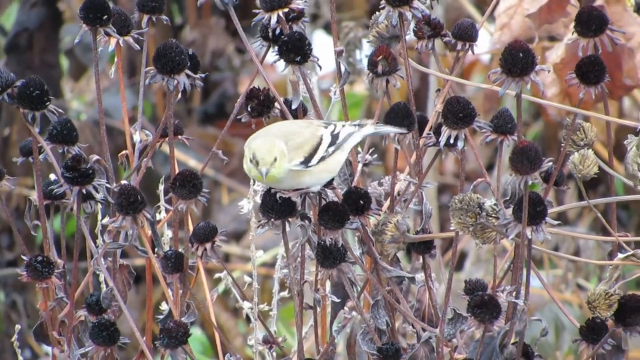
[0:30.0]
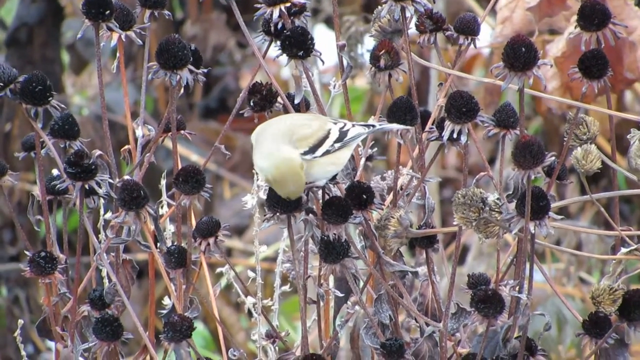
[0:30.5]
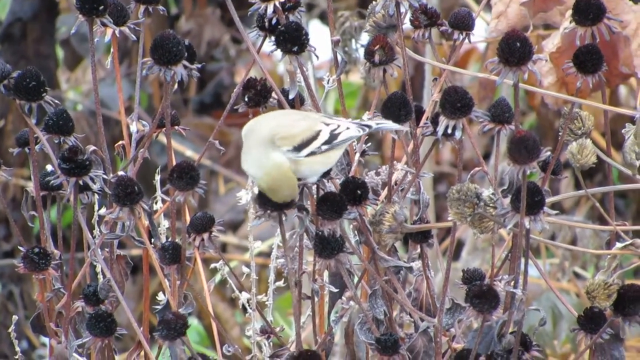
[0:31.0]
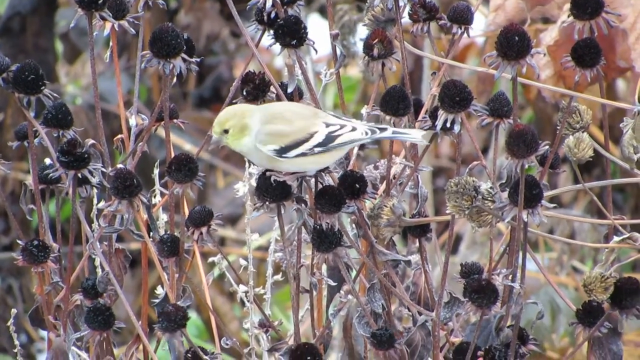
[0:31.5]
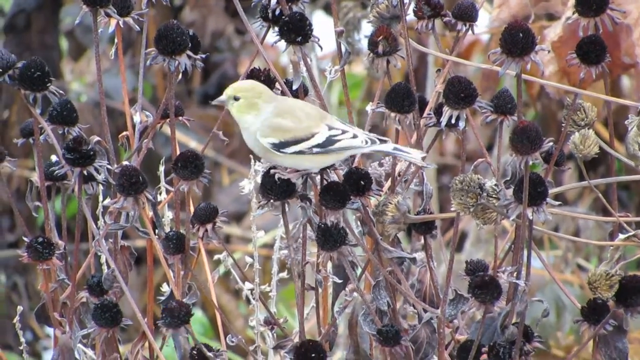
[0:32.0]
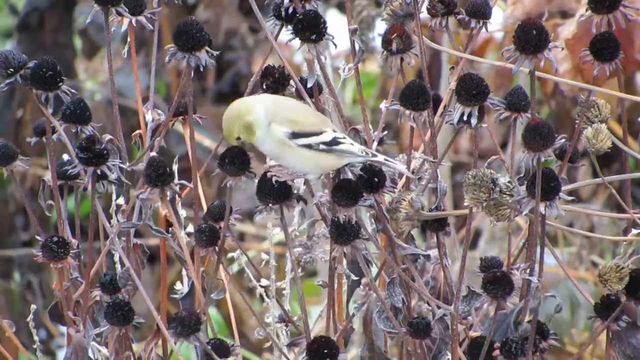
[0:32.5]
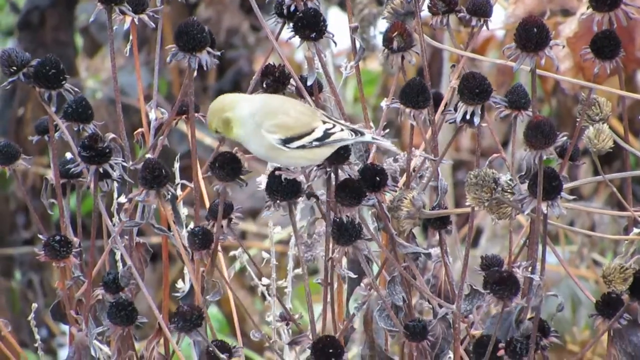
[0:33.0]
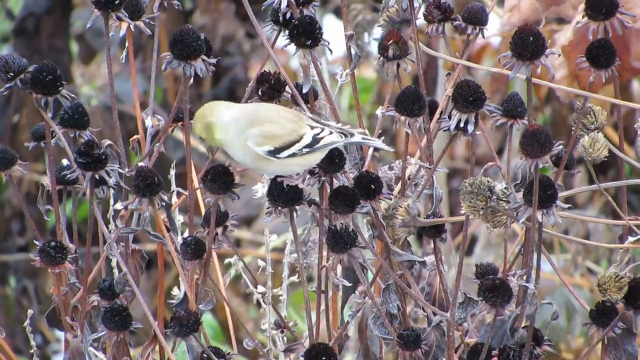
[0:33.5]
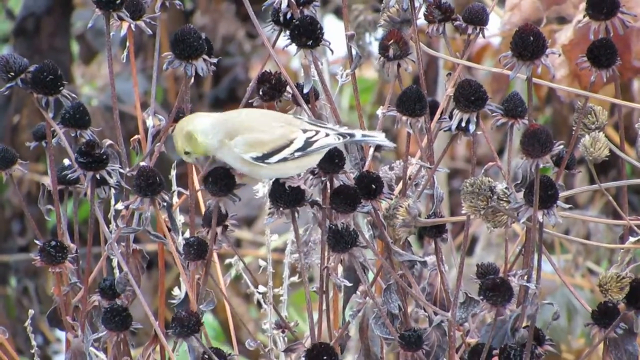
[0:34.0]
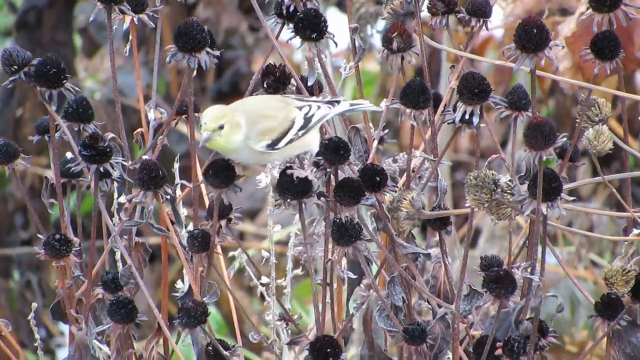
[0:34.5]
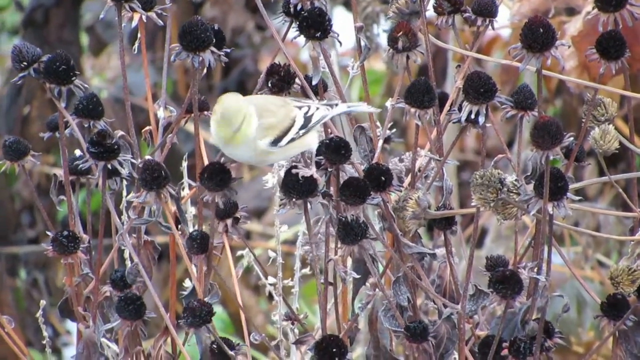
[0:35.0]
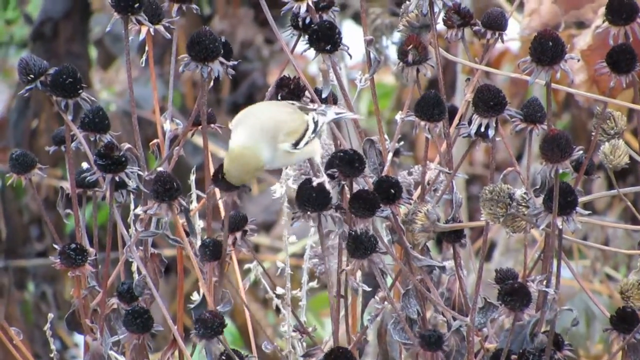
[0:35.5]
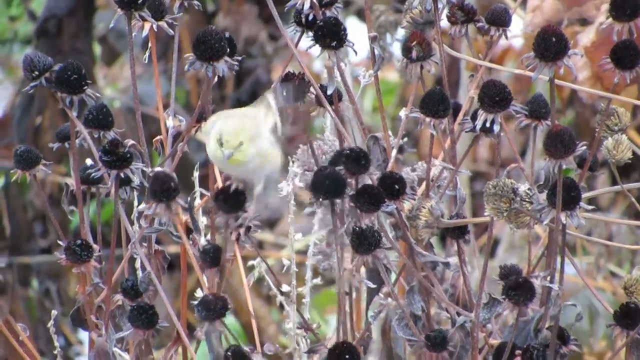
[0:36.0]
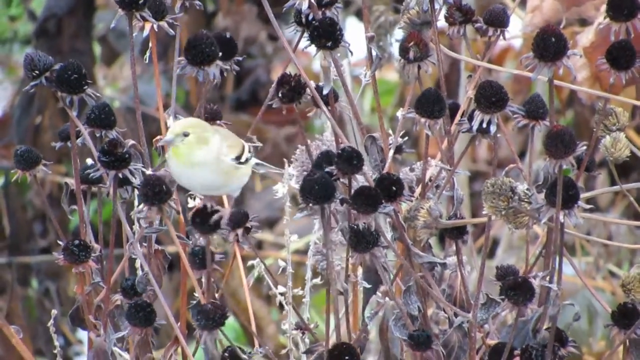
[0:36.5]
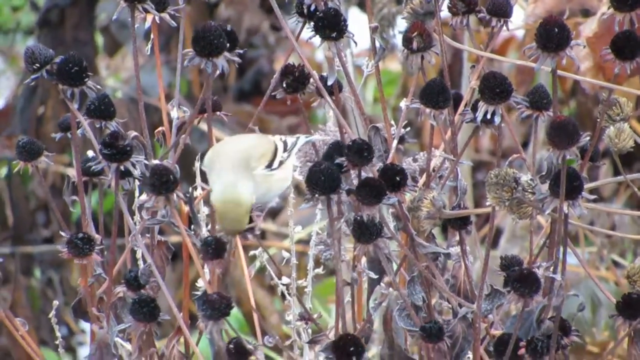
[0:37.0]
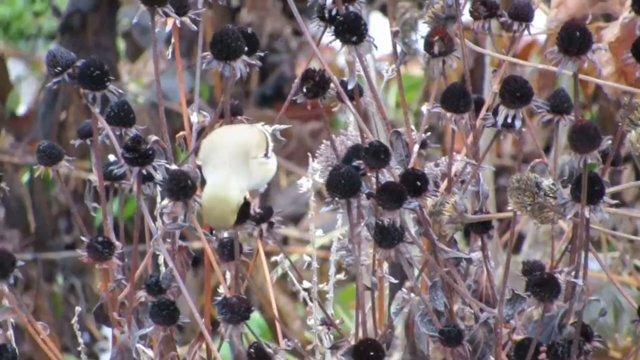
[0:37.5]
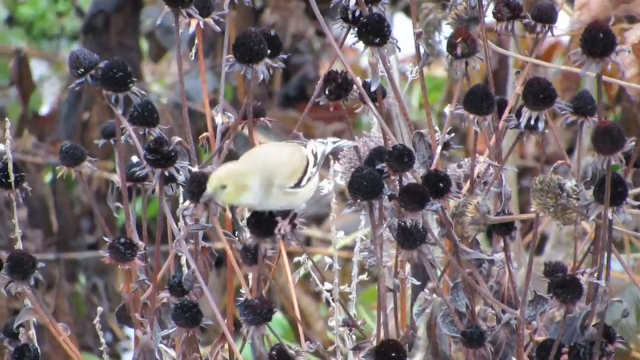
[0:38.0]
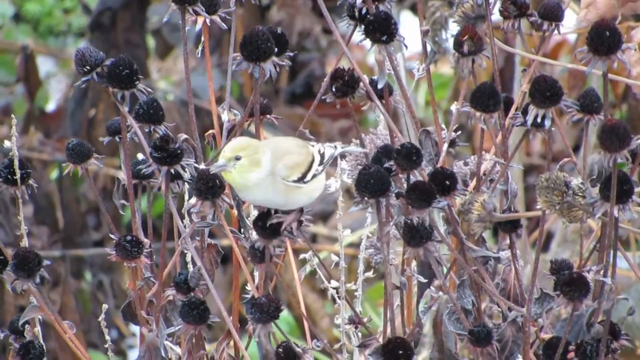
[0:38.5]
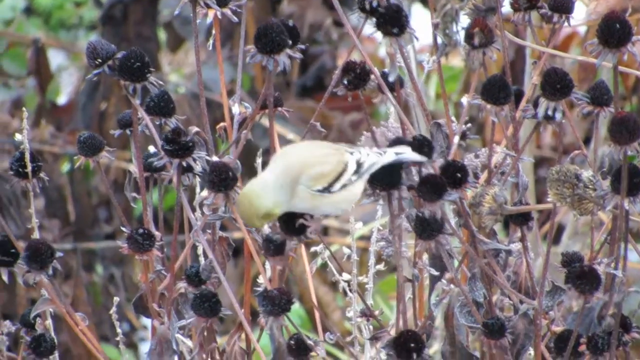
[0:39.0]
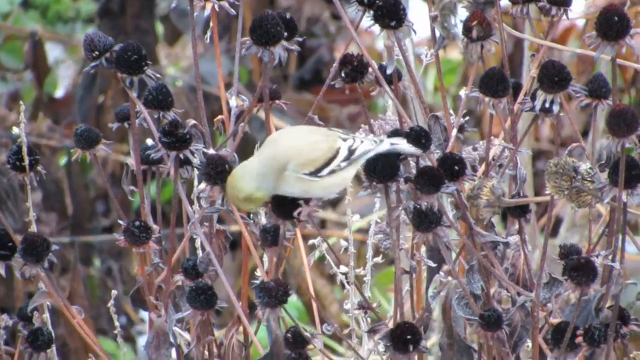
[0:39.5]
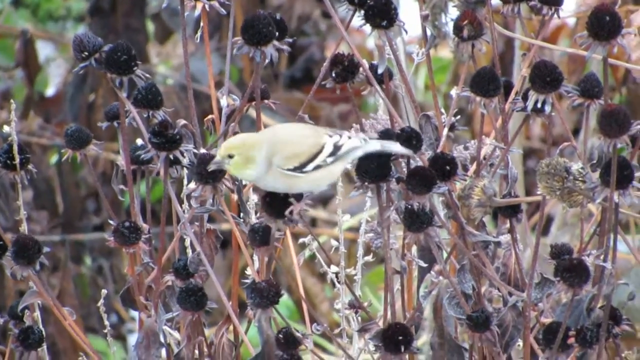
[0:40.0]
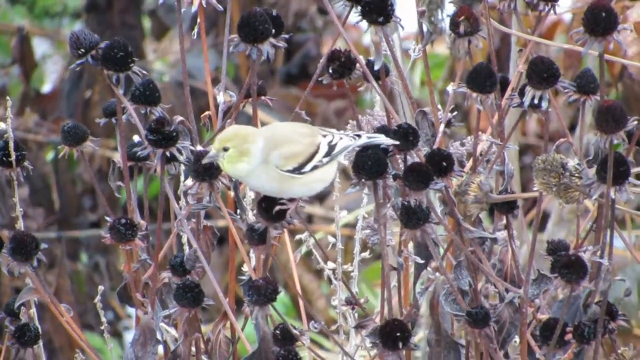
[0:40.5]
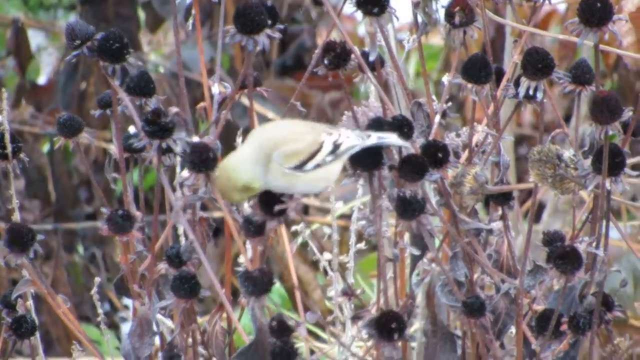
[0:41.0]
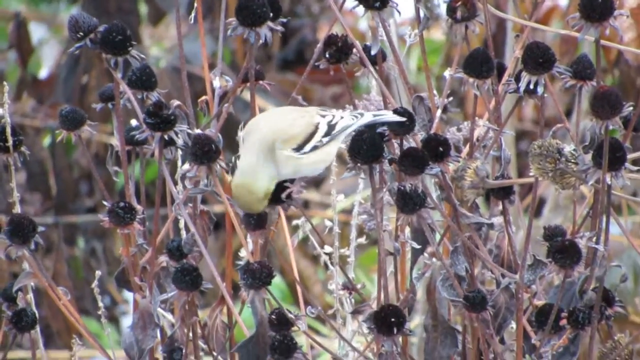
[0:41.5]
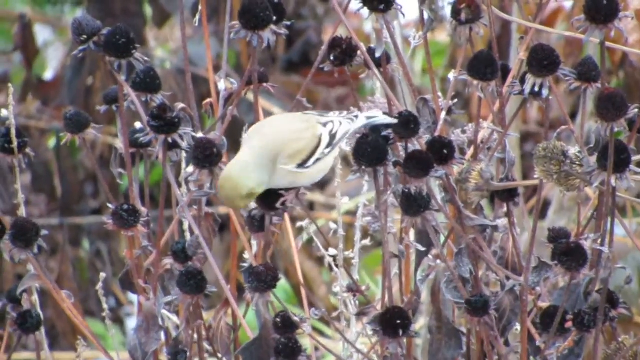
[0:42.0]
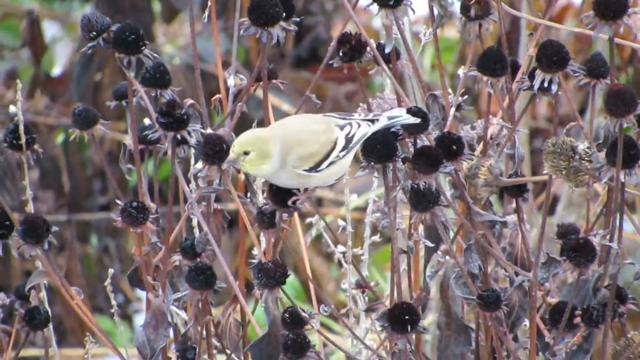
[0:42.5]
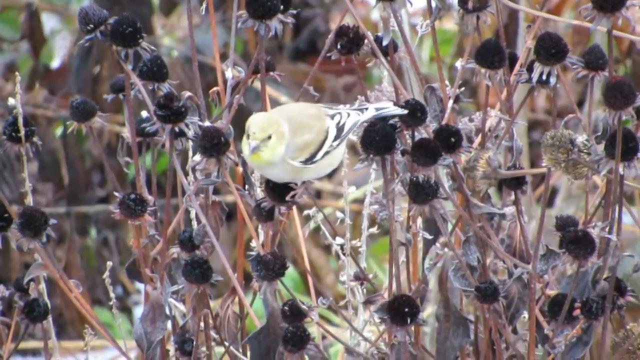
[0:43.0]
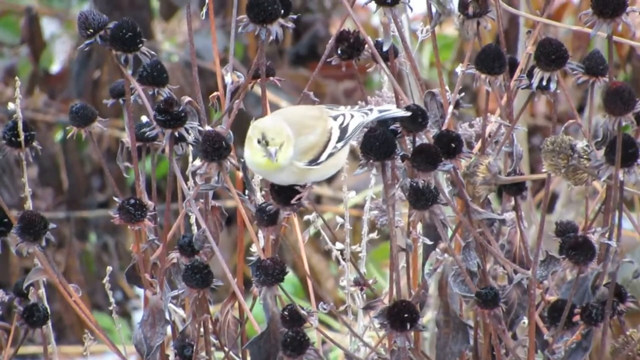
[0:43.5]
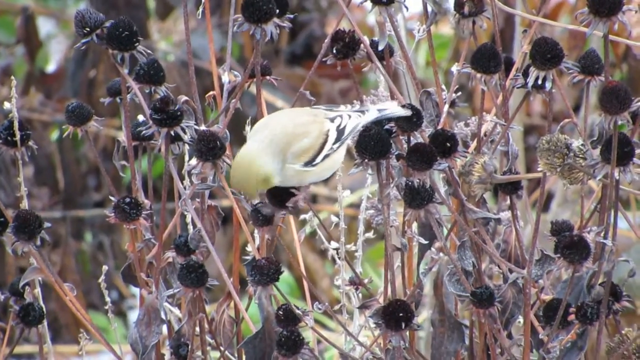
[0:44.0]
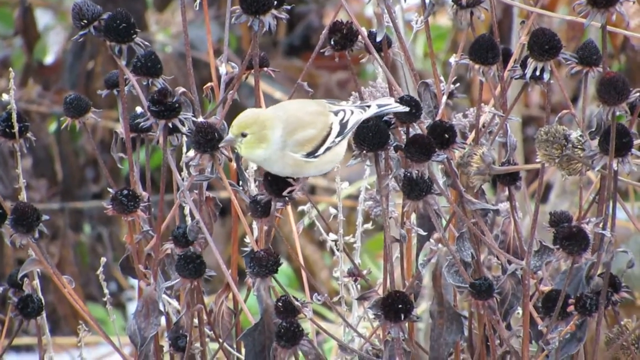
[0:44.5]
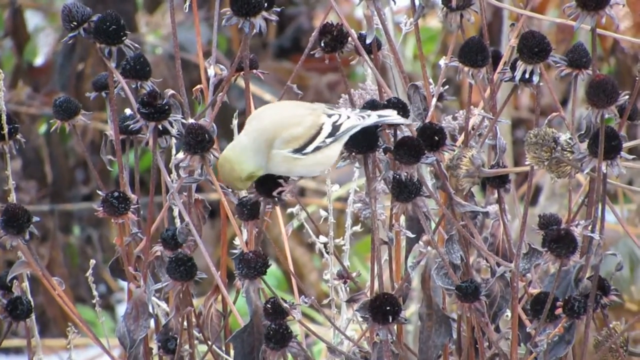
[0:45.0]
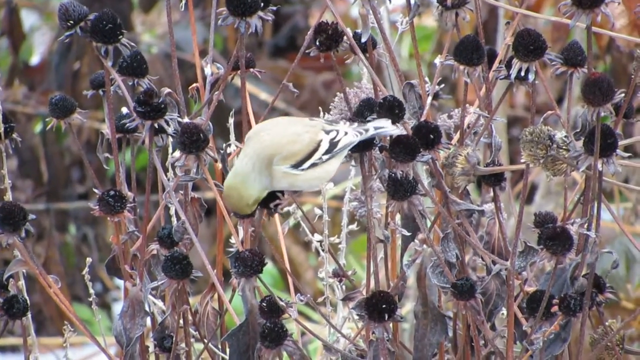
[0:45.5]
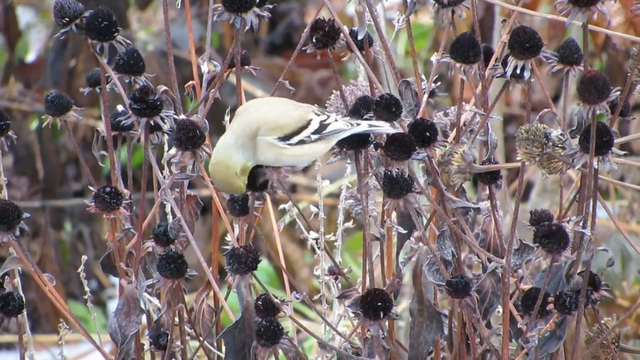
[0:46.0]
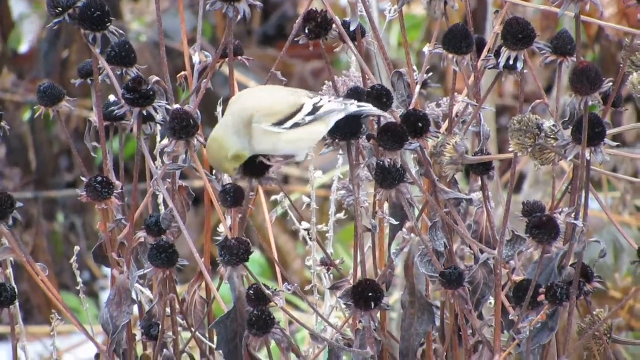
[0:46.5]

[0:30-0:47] The main bird is again picking at the center of a flower, bending its head down in various movements to collect bits of food off different parts of the plant. It balances with both feet on one of the plant's buds. Some of the flowers are drier than others, and they look like they have been dead for quite some time. Dried-up leaves are on the stem of the flower plant or bush. The green on the bird's face looks somewhat like a light pistachio green. The black and white feathers on its back almost resemble zebra stripes, and its belly seems to maybe be a light white rather than the tan on its back.